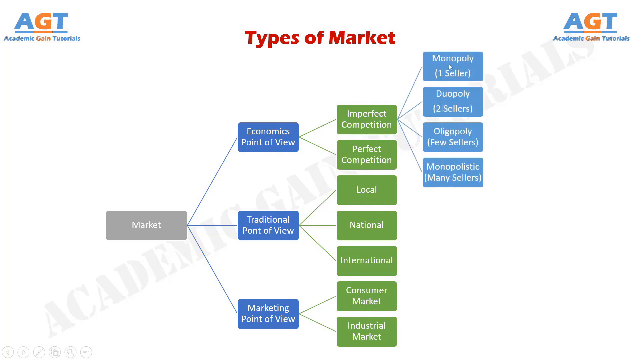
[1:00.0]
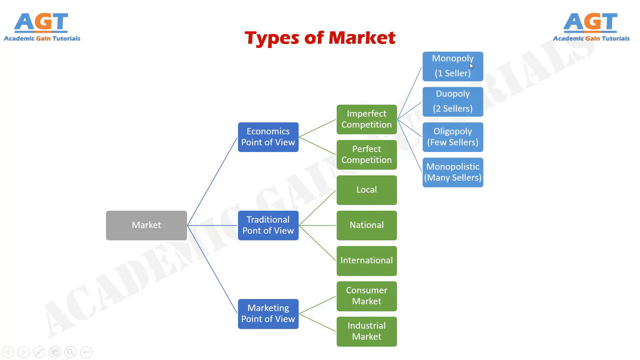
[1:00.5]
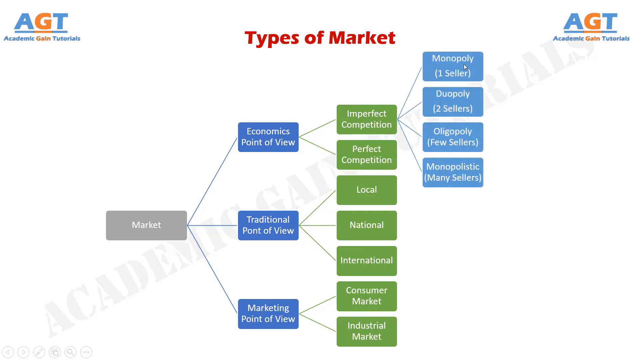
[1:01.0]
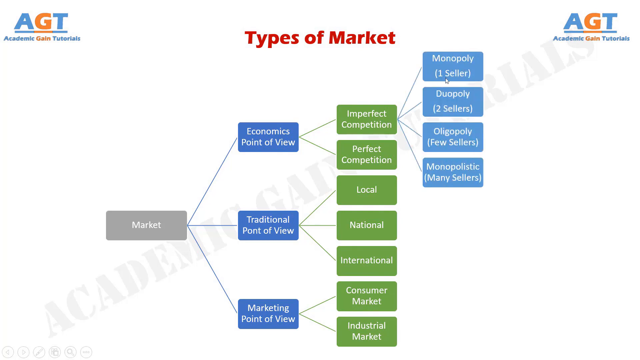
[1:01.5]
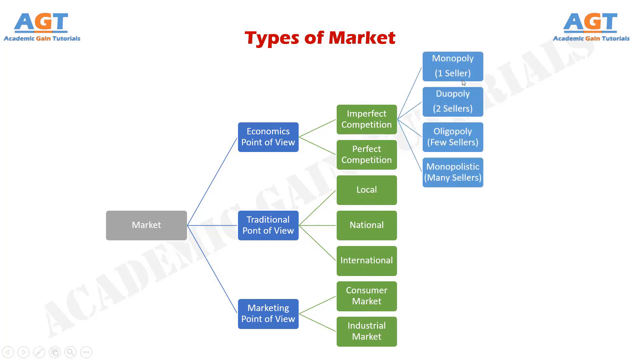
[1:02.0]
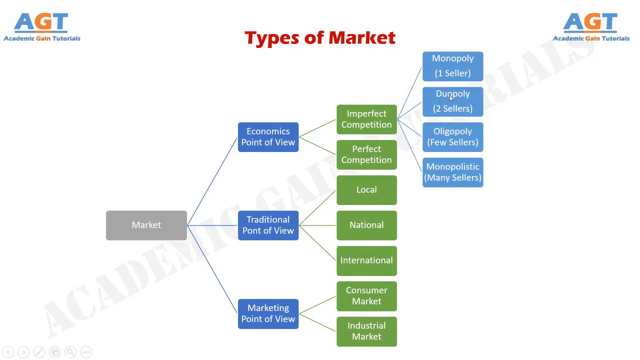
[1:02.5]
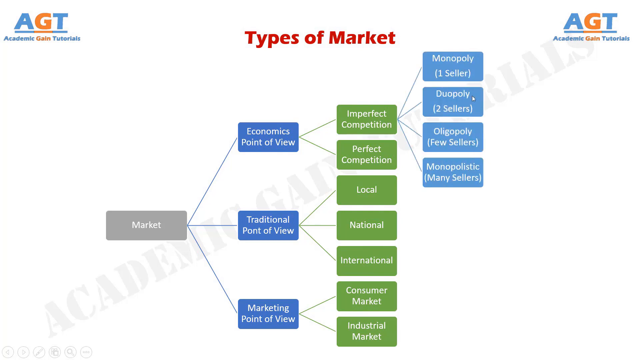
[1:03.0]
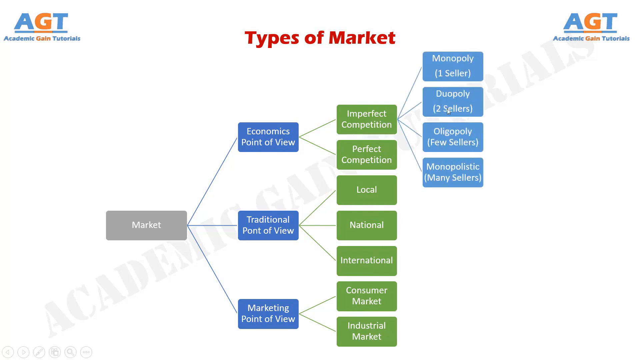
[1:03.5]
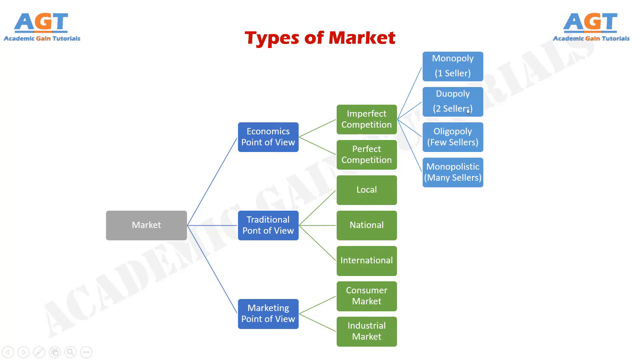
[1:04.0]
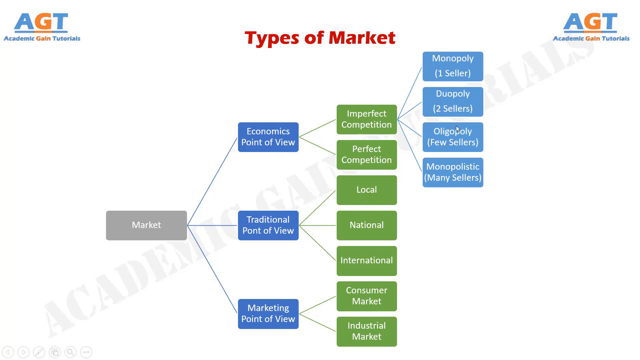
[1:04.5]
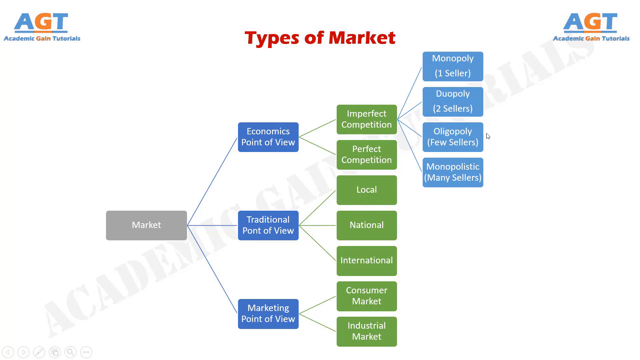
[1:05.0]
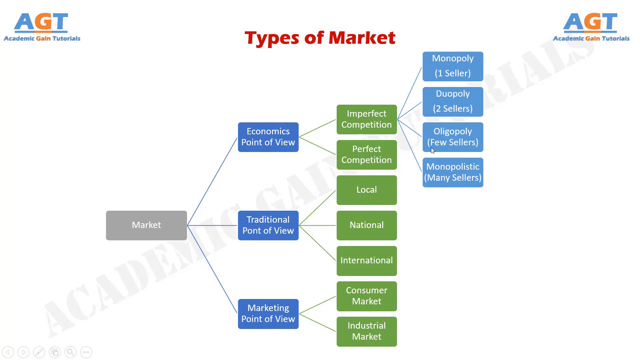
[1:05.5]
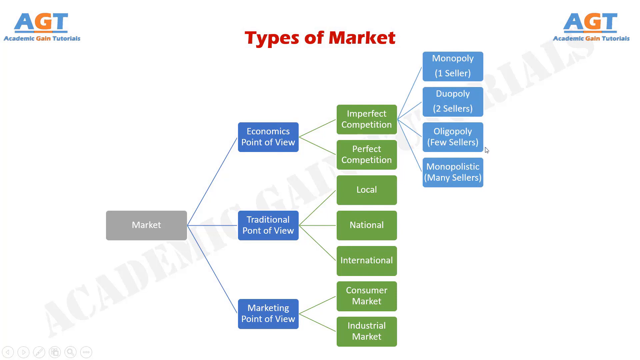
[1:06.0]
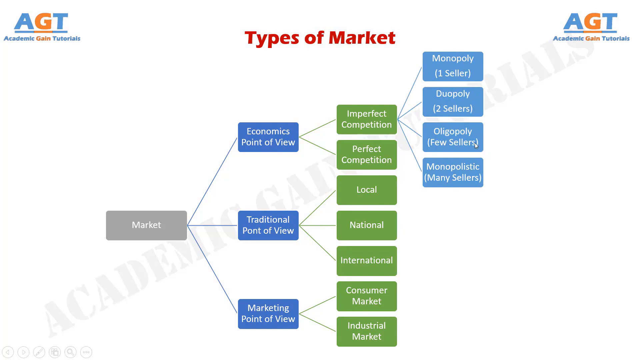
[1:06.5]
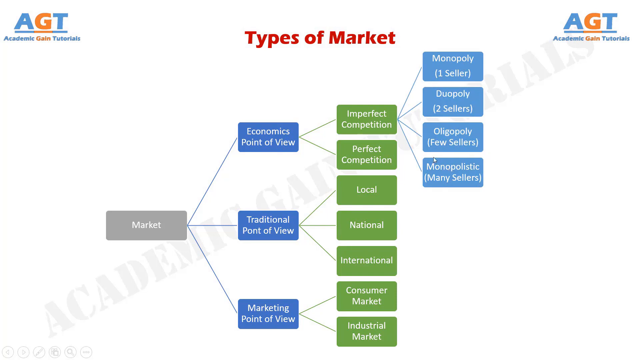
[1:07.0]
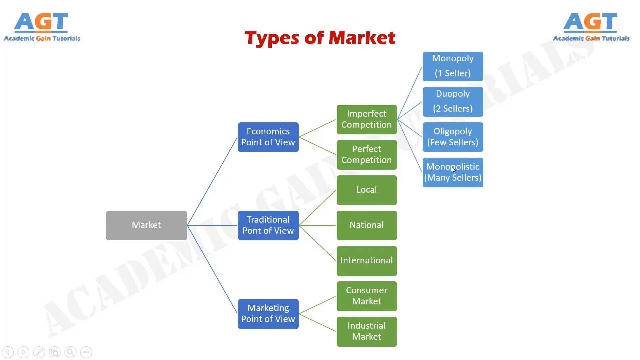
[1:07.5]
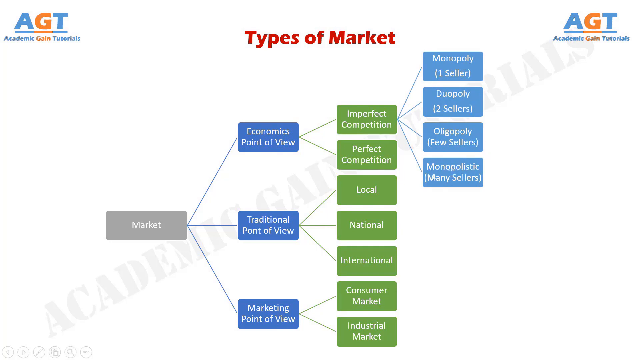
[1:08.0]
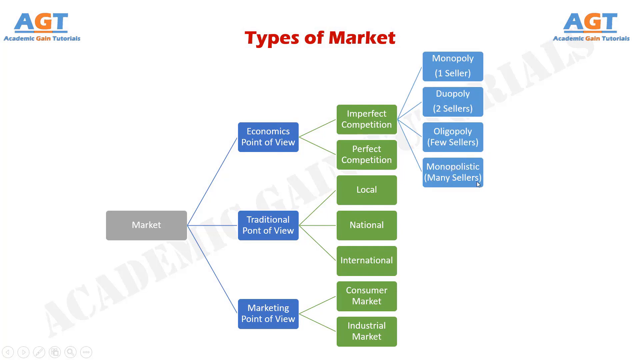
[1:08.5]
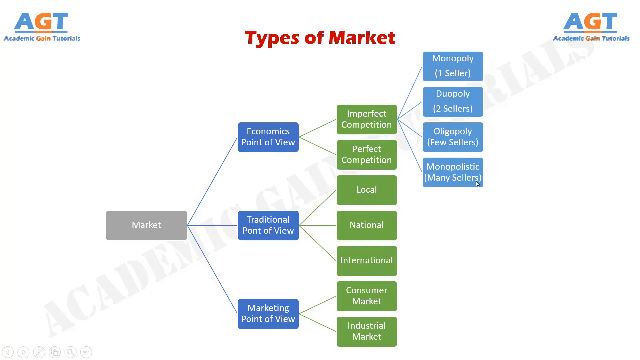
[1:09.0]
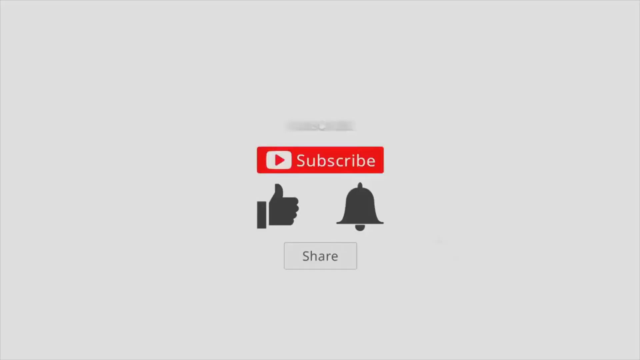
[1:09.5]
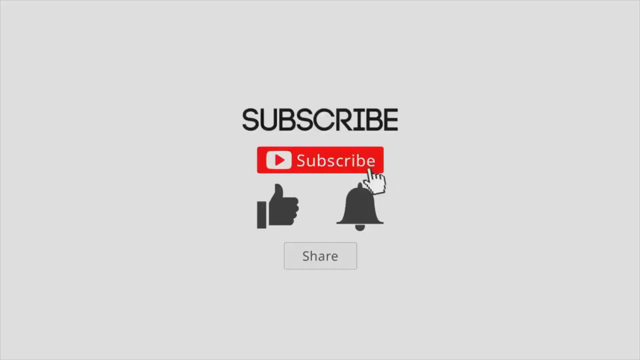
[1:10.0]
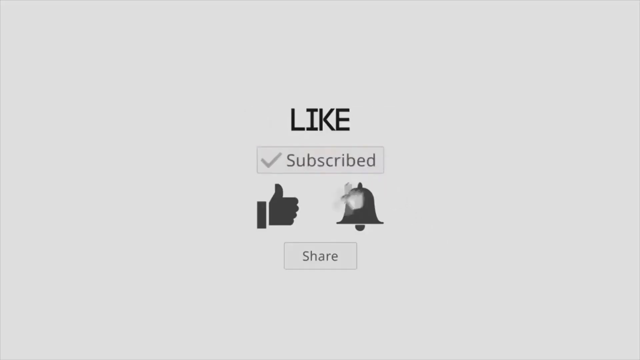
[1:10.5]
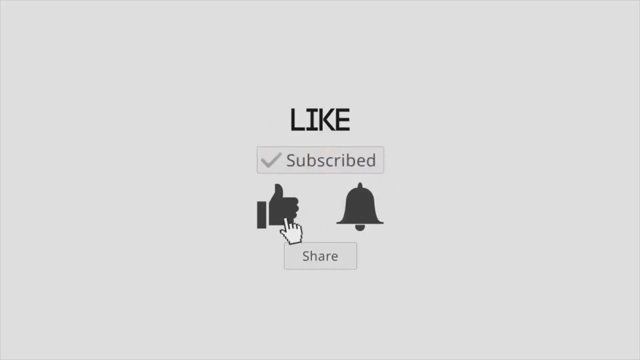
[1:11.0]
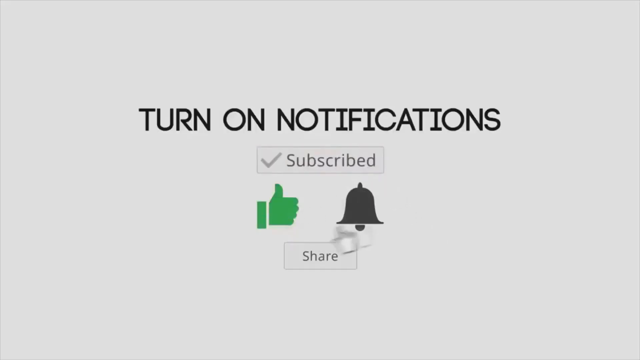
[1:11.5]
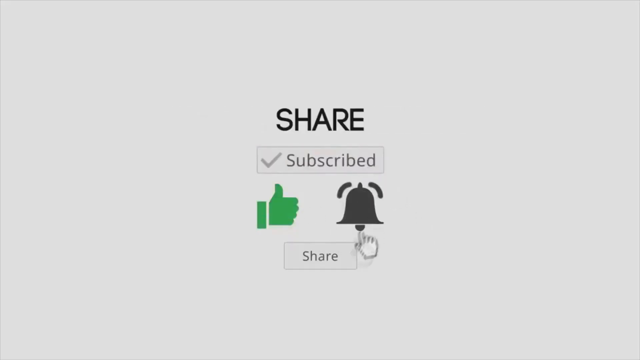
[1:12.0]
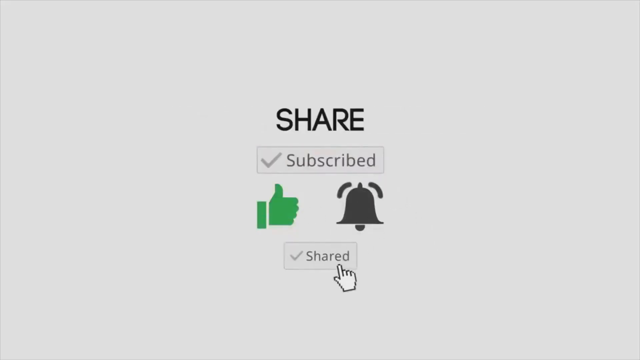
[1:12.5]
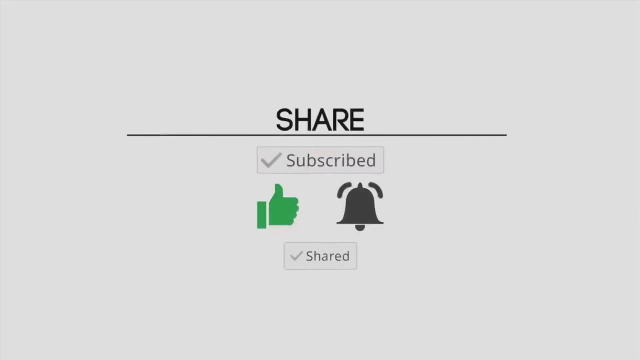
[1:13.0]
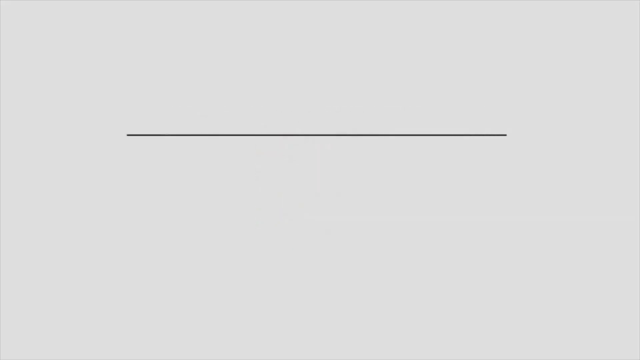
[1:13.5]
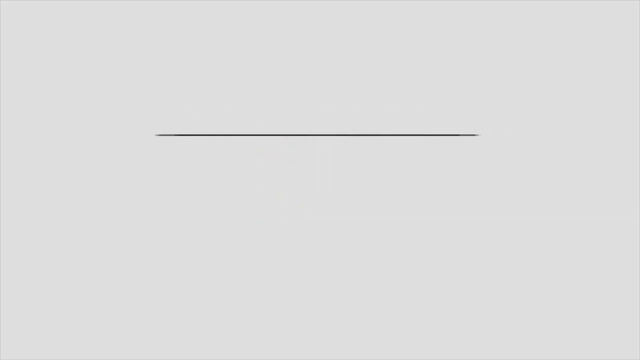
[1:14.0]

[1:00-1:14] A computer screen recording shows types of market, broken down into the economics point of view, the traditional point of view, and the marketing point of view, and broken down further. From the economic point of view, one box leads to imperfect competition, which in turn leads to monopoly, duopoly, oligopoly, and monopolistic. The computer's cursor highlights and points to a couple of these as if indicating their importance. The screen then changes to a grey background with the word subscribe, which changes to the word like, then to the words turn on notification, and finally share.